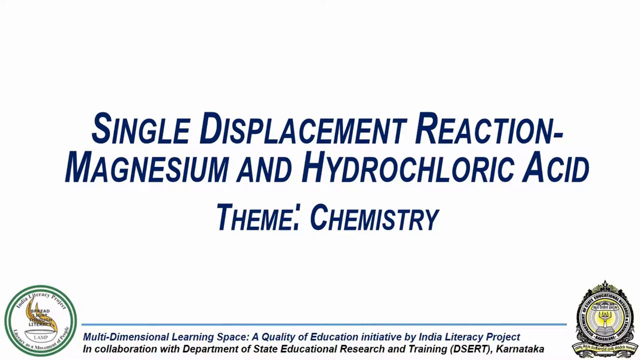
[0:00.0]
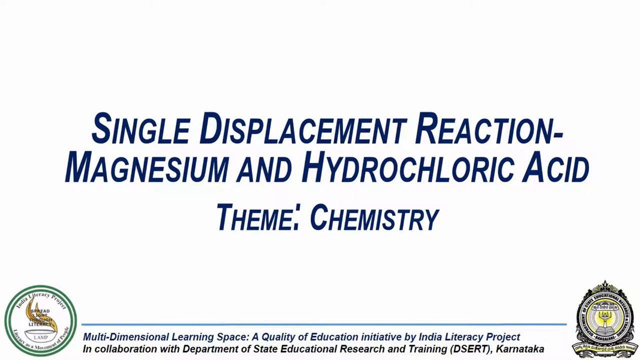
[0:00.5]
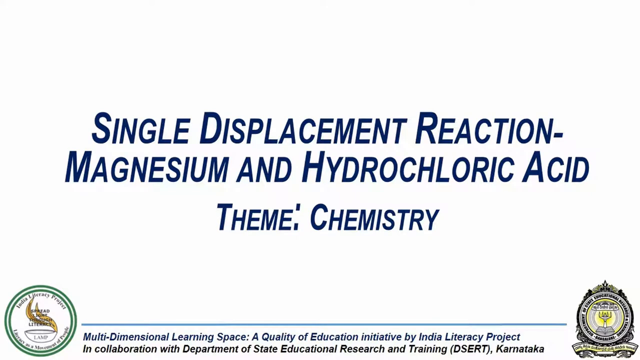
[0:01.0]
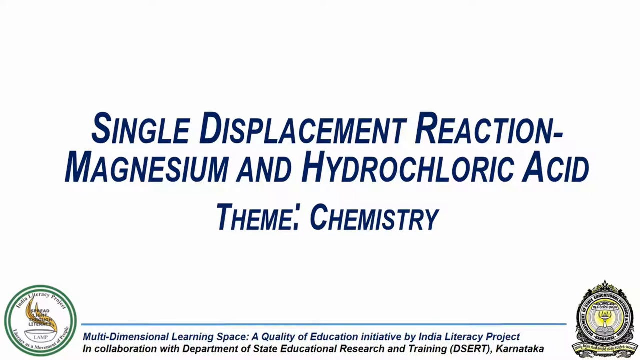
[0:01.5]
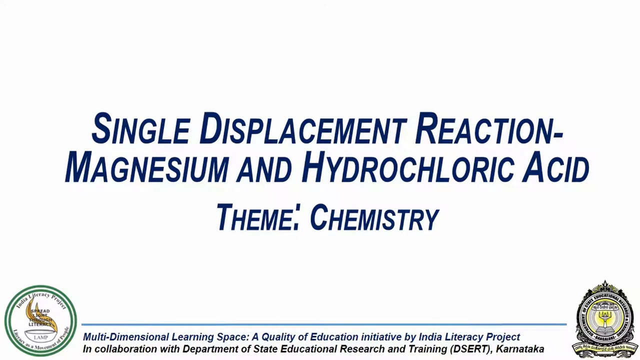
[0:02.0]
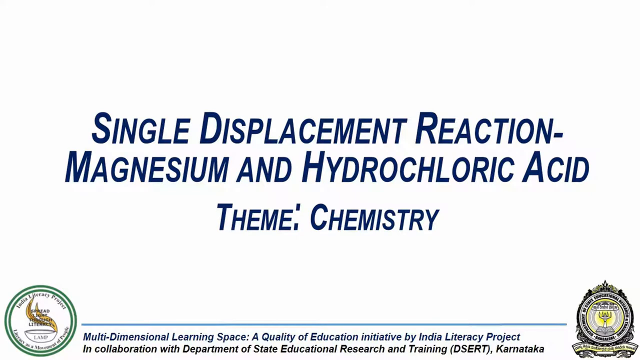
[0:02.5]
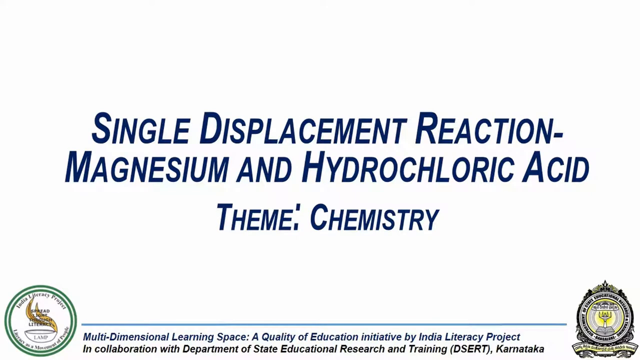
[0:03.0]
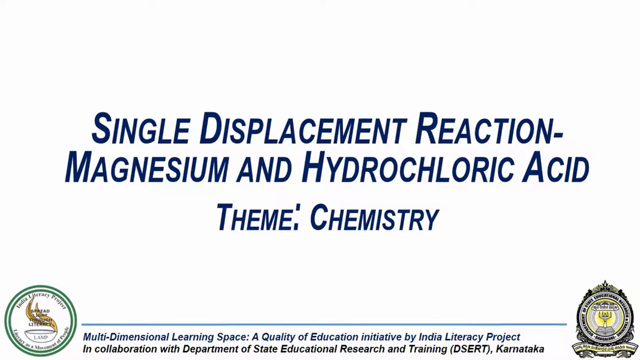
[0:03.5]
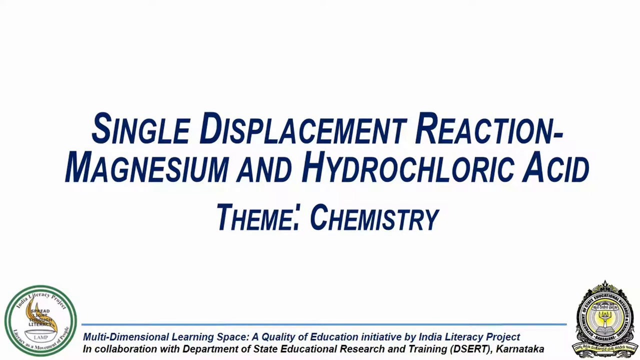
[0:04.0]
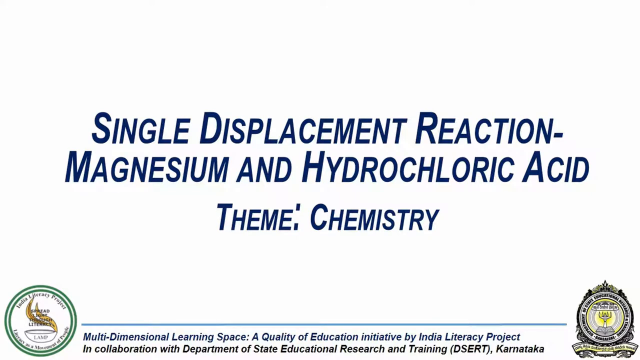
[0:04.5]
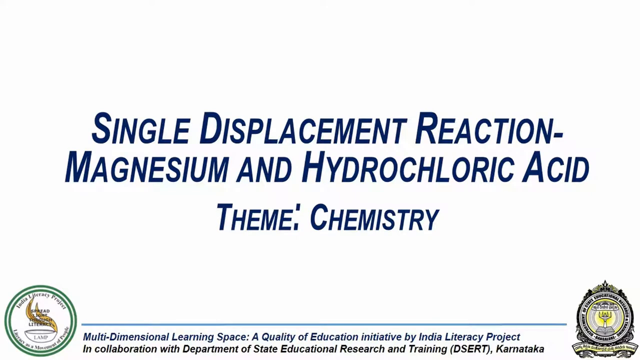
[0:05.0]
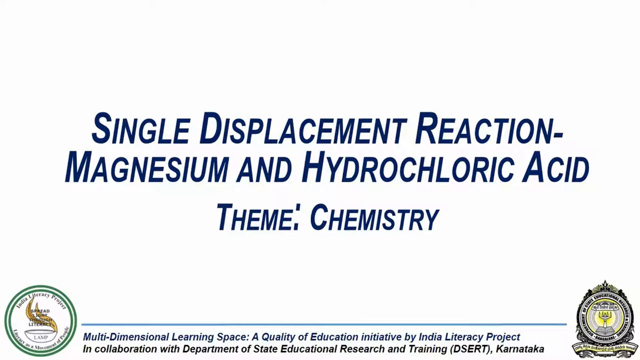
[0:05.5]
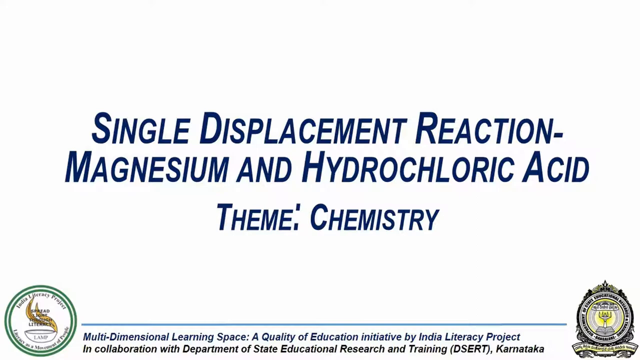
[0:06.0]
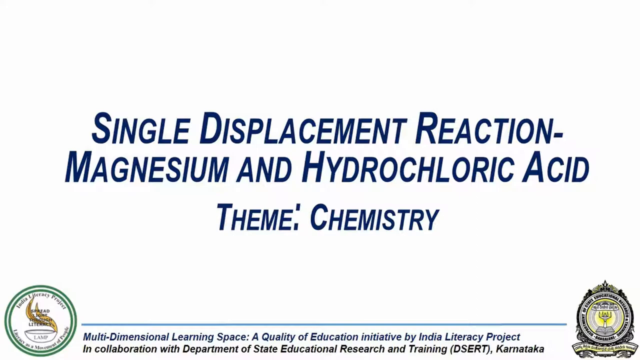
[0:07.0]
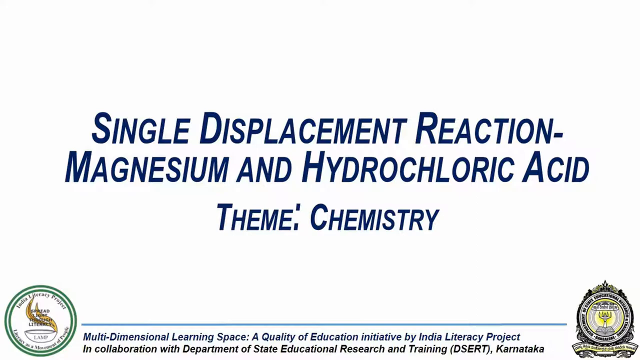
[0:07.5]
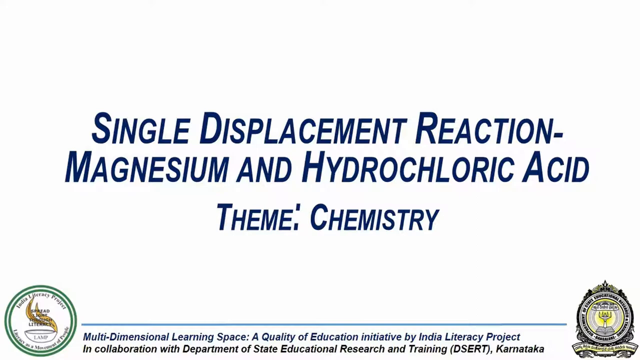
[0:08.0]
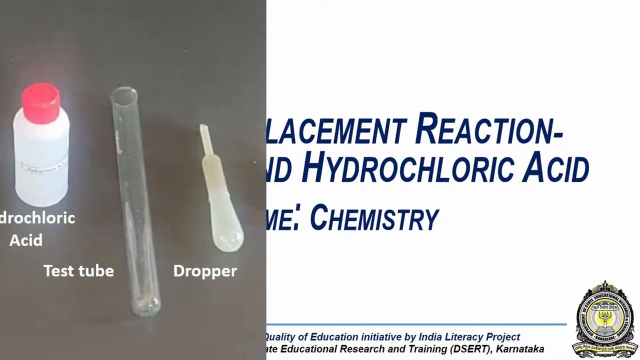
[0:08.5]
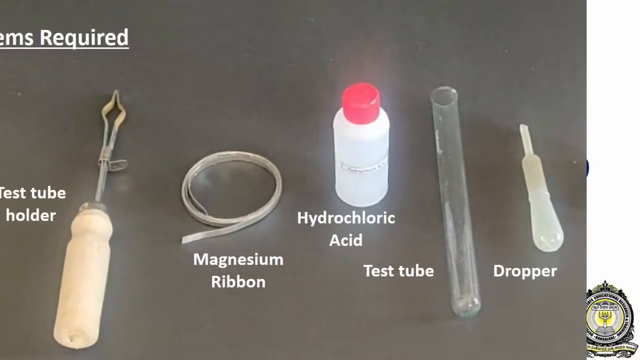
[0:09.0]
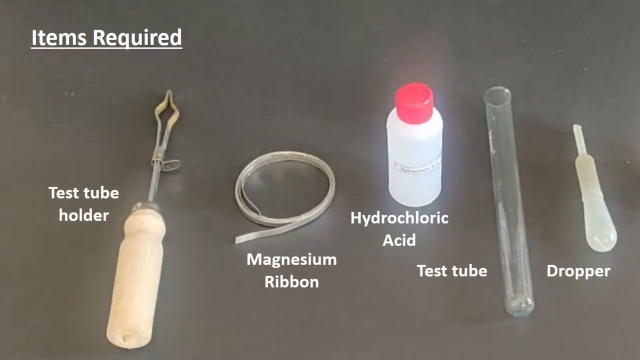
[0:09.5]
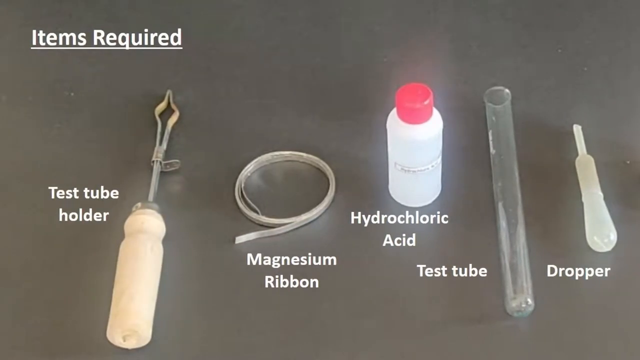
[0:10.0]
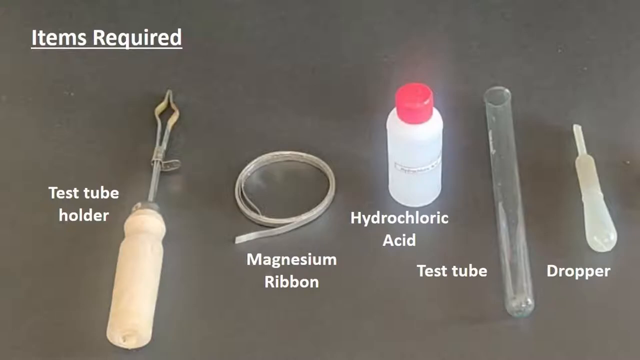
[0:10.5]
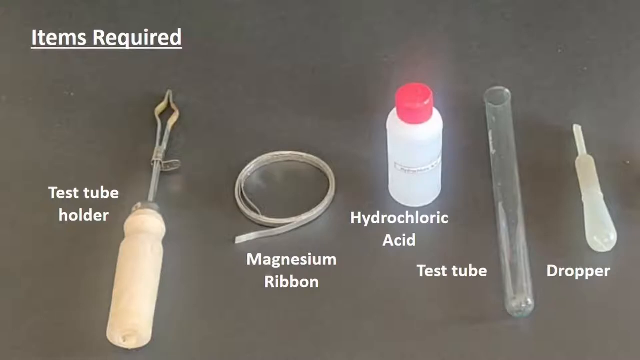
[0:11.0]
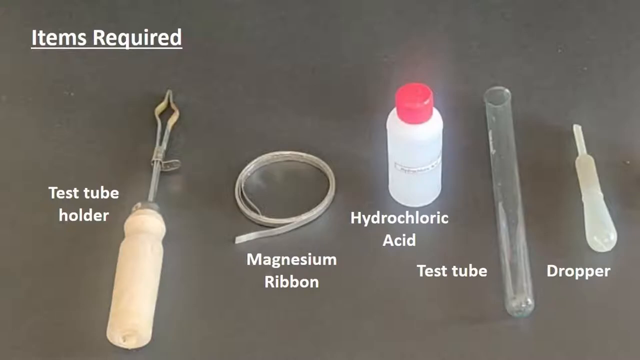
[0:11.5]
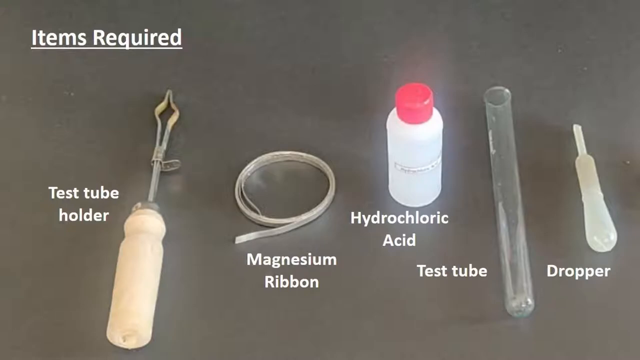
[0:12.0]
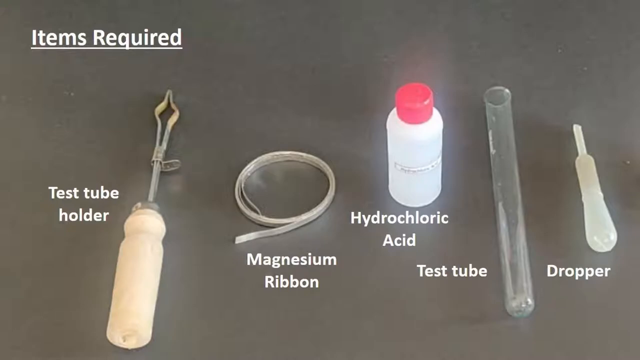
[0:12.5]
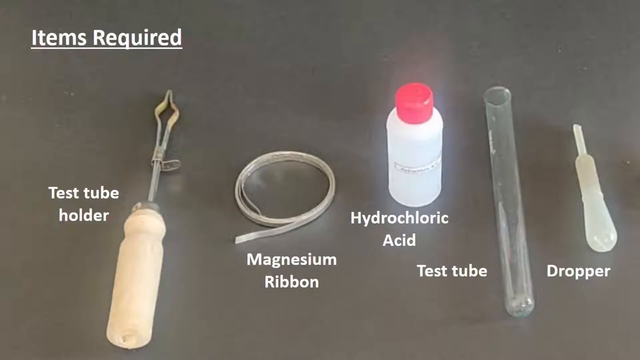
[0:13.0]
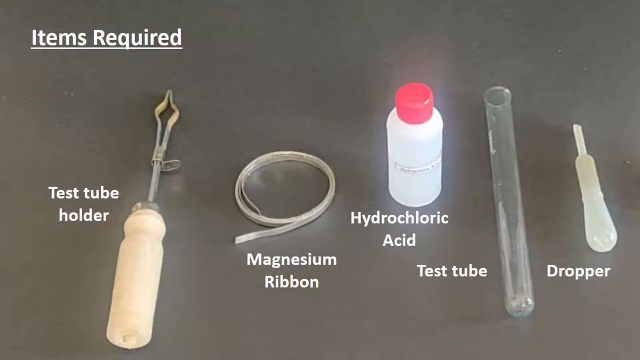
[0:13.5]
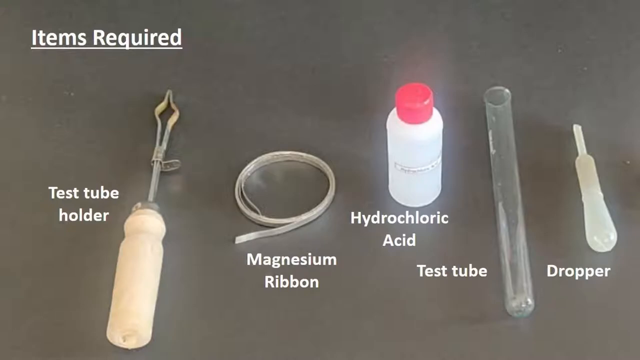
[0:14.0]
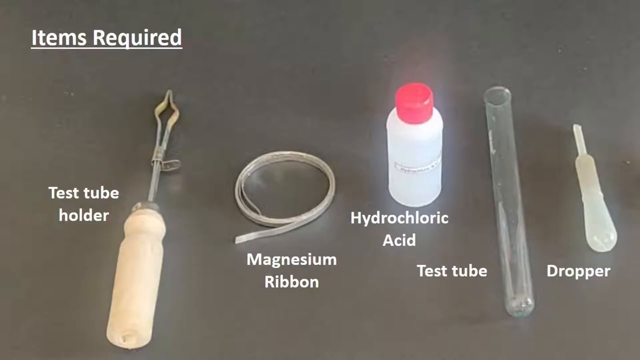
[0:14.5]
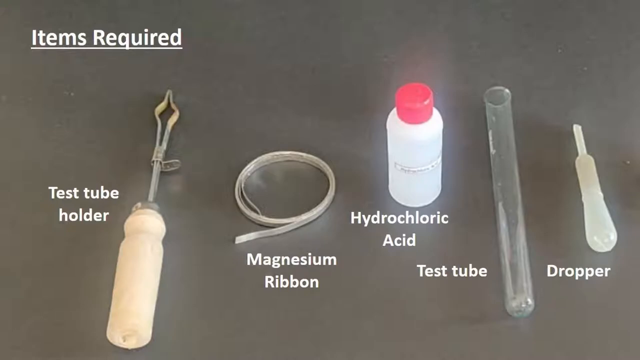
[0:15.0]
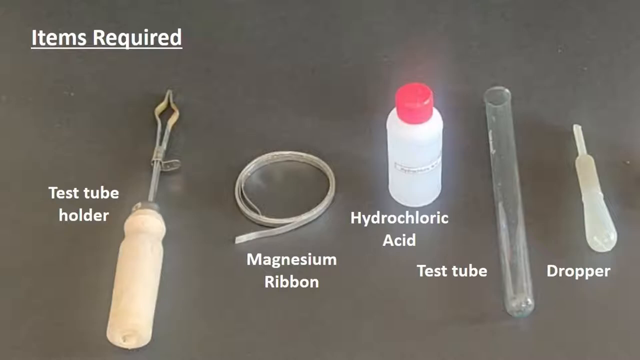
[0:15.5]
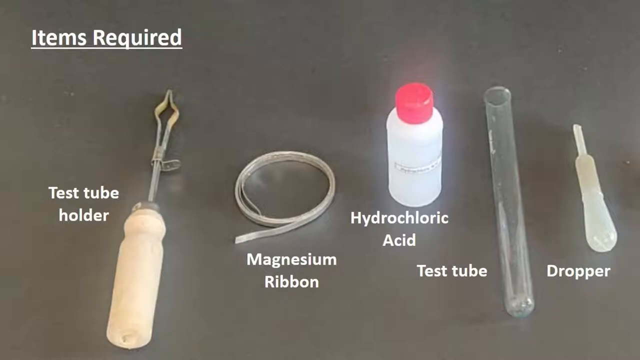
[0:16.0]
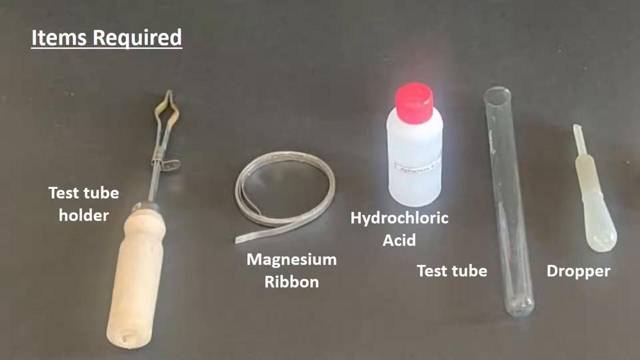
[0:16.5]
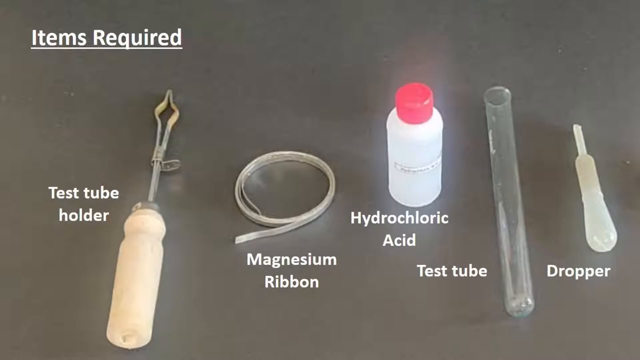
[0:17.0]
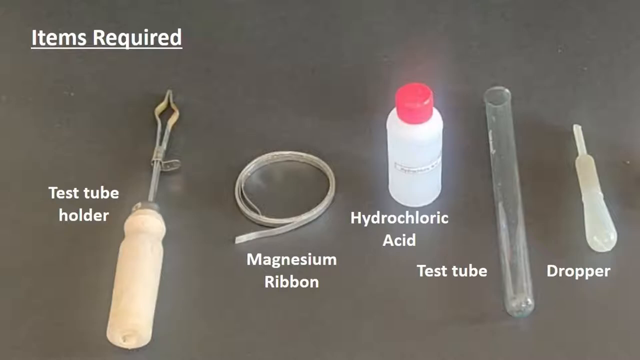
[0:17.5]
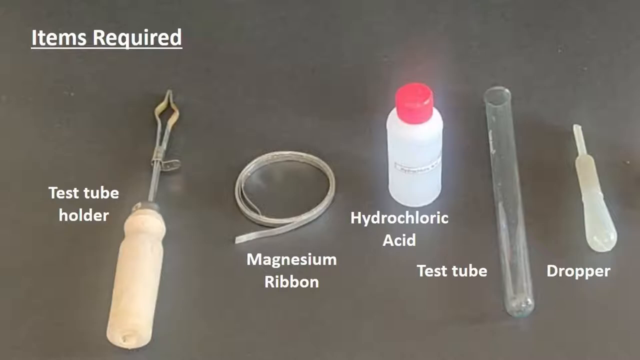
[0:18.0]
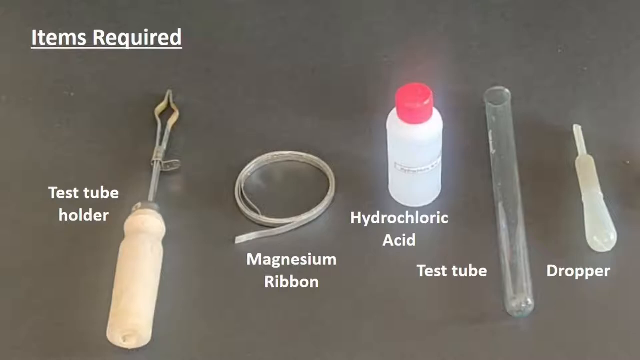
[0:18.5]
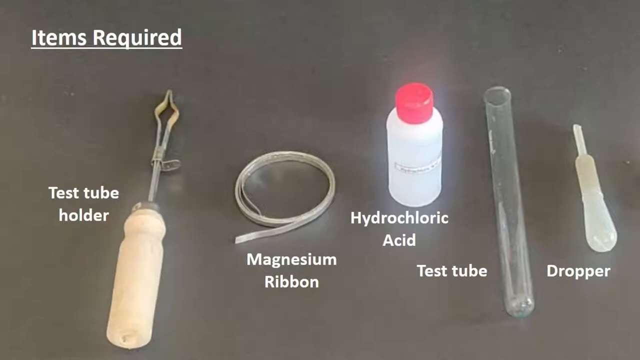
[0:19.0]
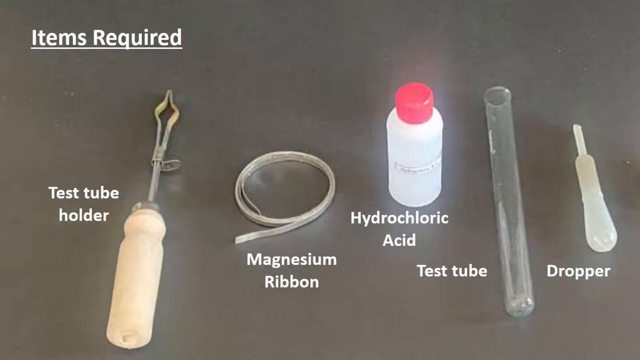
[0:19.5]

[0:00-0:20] The video opens on a white background with dark blue text in the middle reading "Single Displacement Reaction, Magnesium and Hydrochloric Acid, Theme: Chemistry." At the bottom are two detailed seals, one on the right and one on the left, too small to read. Text at the bottom reads "multi-dimensional learning space, a quality of education initiative by India Literacy Project in collaboration with Department of State Educational Research and Training, (DSERT) Karnataka." The video then transitions to a tabletop that appears to be stainless steel. Text in the top left corner reads "items required." Lying on the tabletop from left to right are items labeled with white text: "test tube holder," "magnesium ribbon," "hydrochloric acid," "test tube," and "dropper." They are items required for a chemistry test.